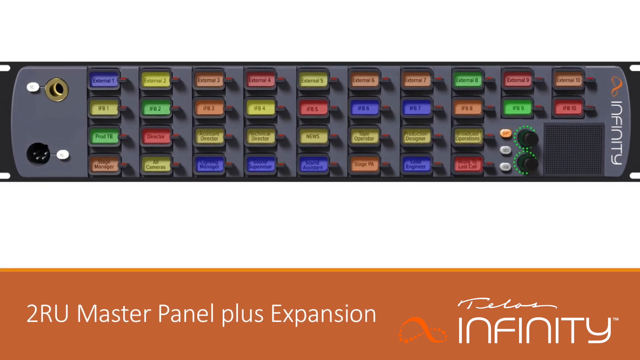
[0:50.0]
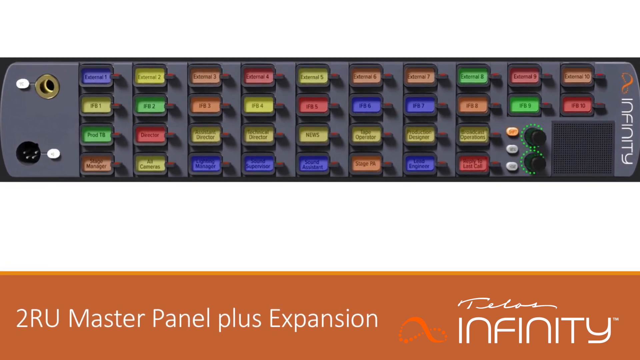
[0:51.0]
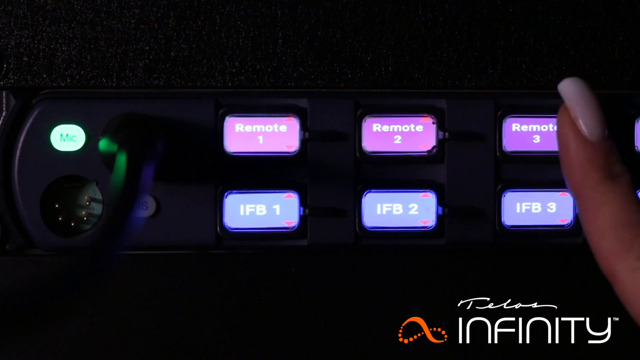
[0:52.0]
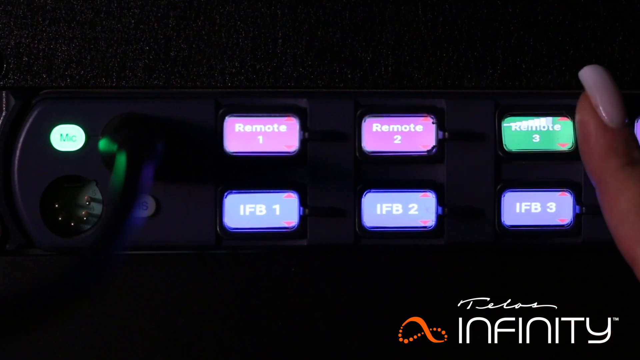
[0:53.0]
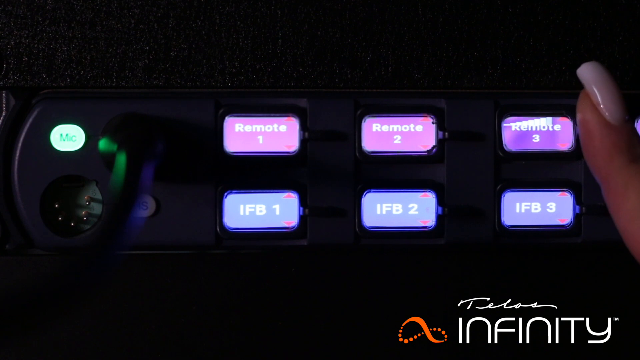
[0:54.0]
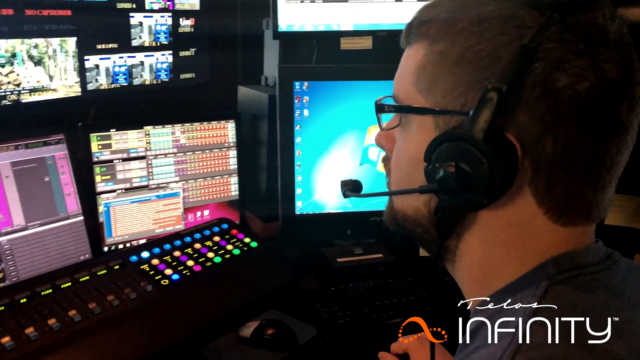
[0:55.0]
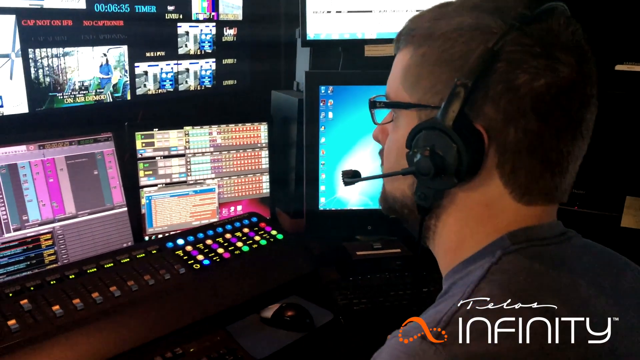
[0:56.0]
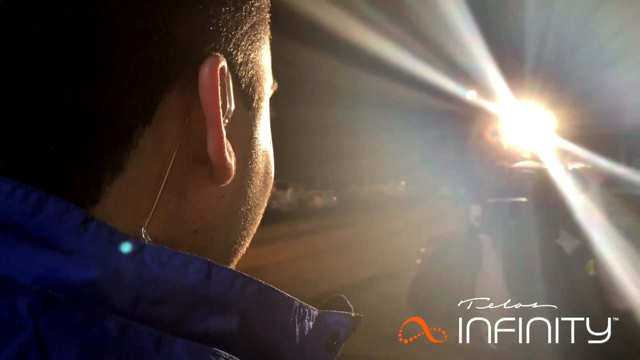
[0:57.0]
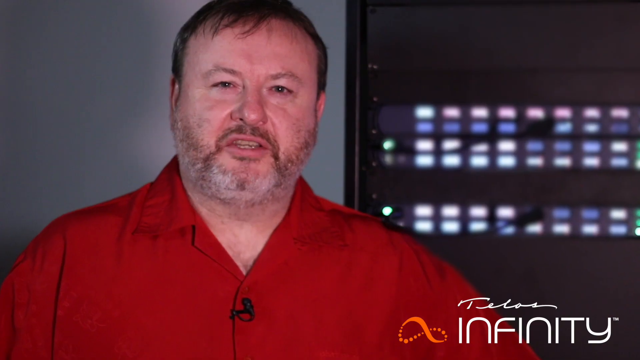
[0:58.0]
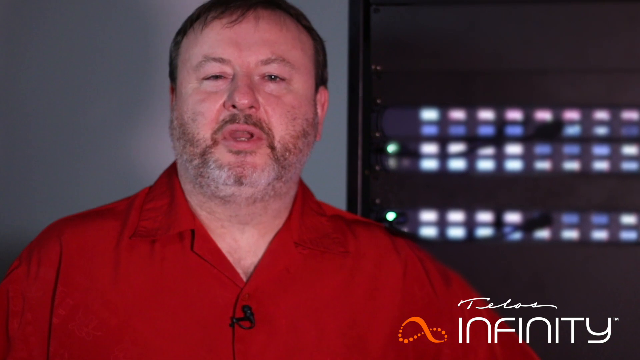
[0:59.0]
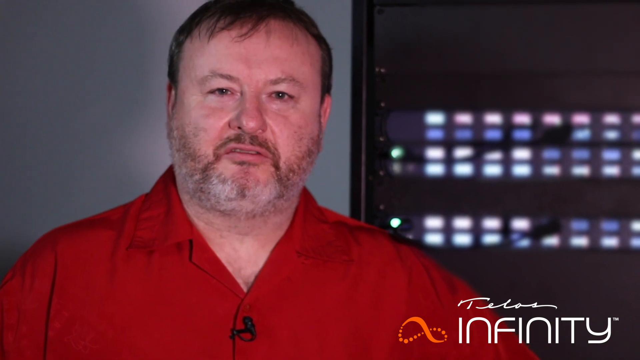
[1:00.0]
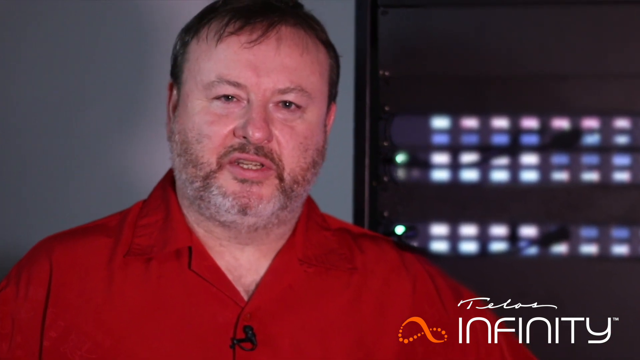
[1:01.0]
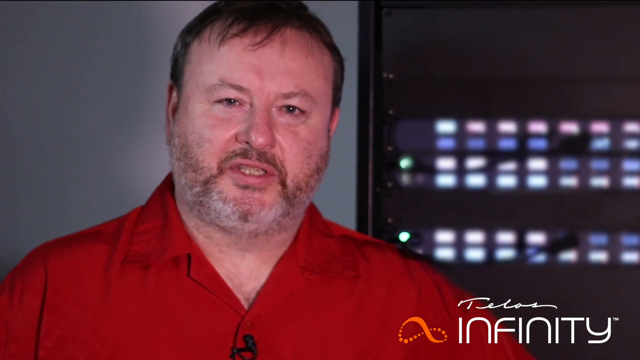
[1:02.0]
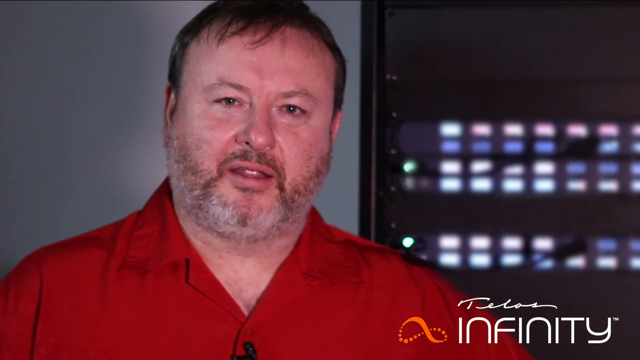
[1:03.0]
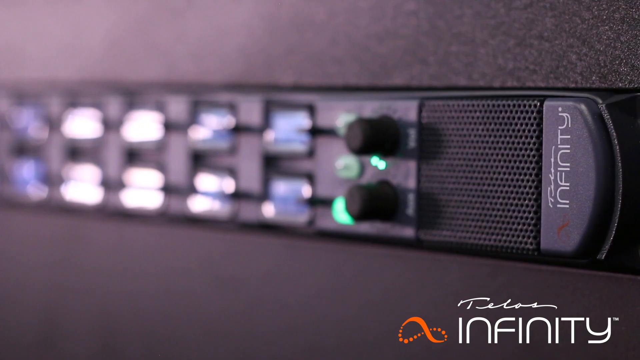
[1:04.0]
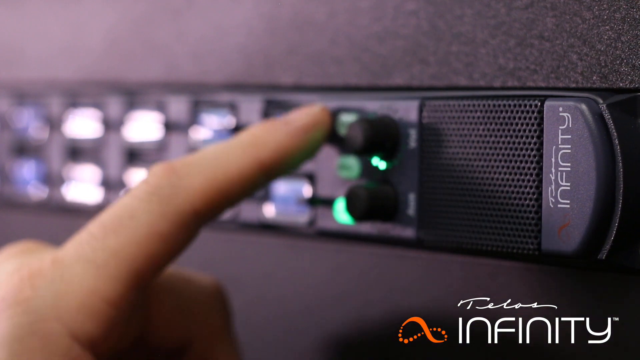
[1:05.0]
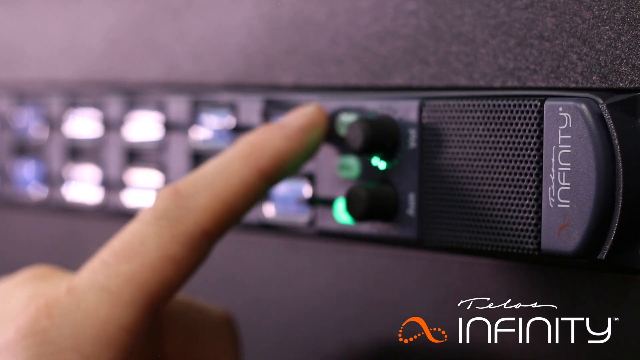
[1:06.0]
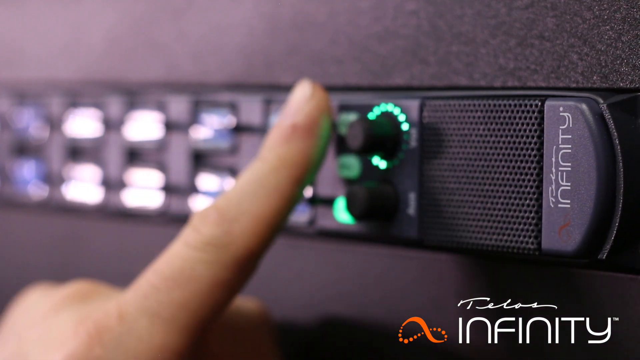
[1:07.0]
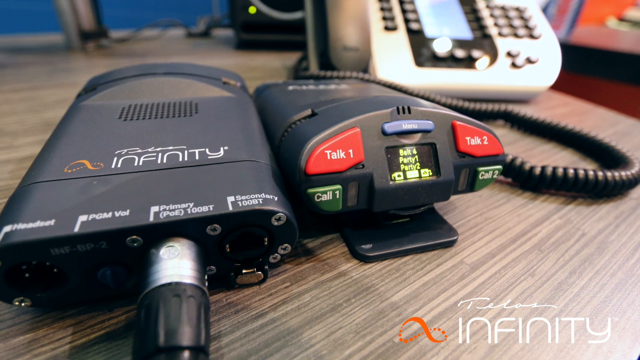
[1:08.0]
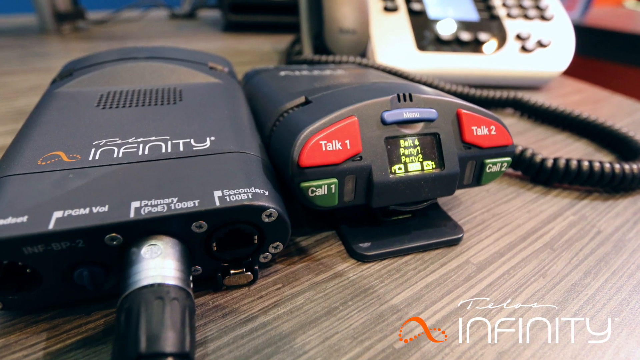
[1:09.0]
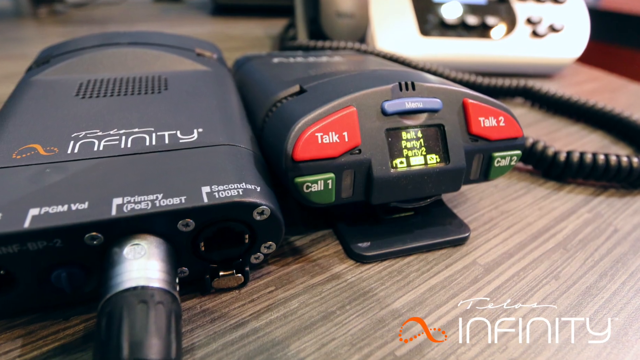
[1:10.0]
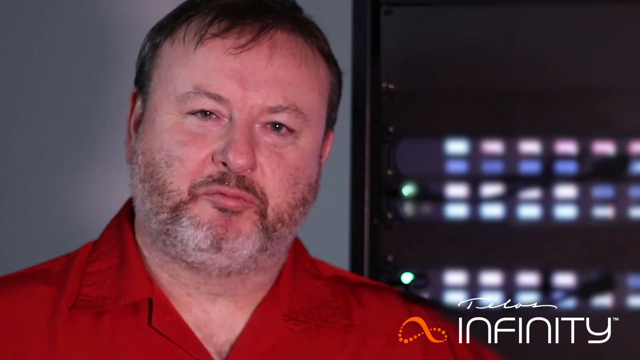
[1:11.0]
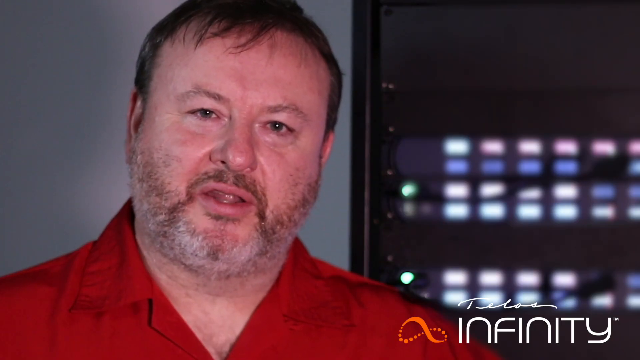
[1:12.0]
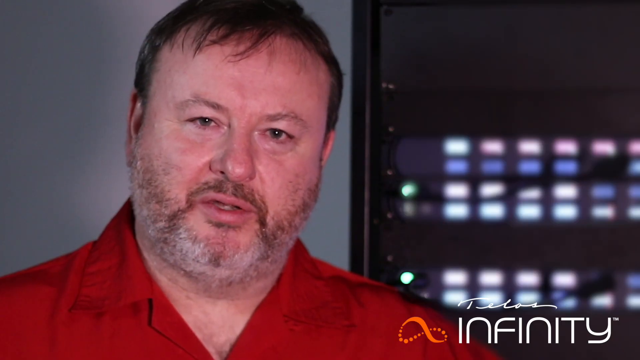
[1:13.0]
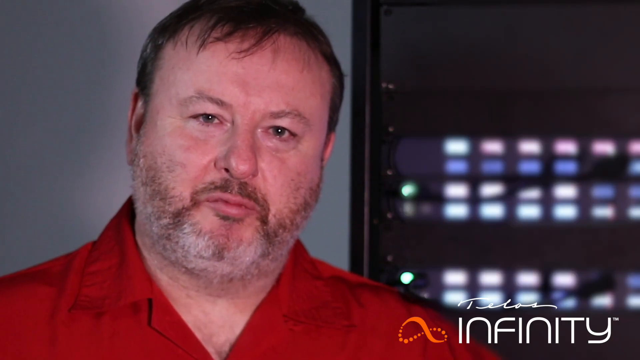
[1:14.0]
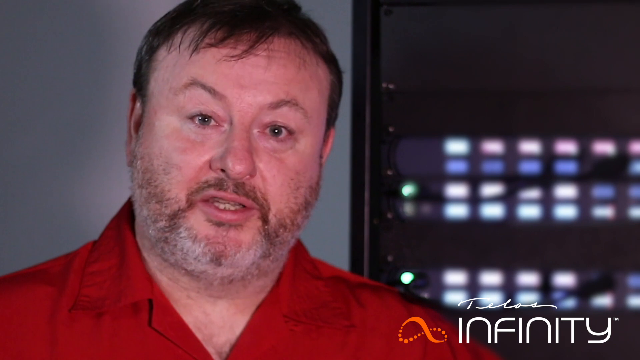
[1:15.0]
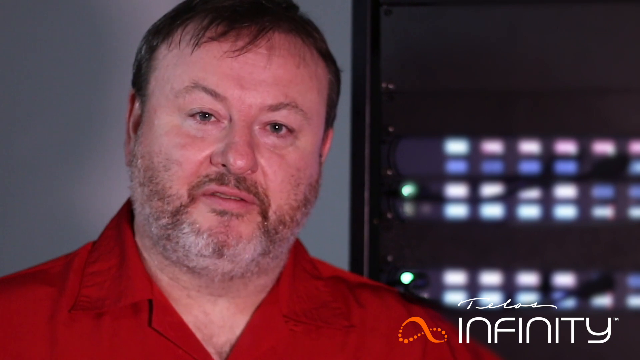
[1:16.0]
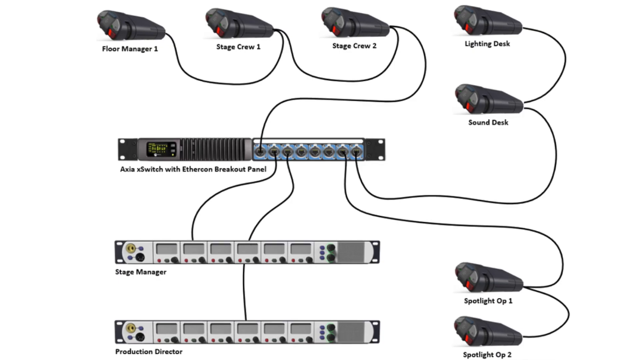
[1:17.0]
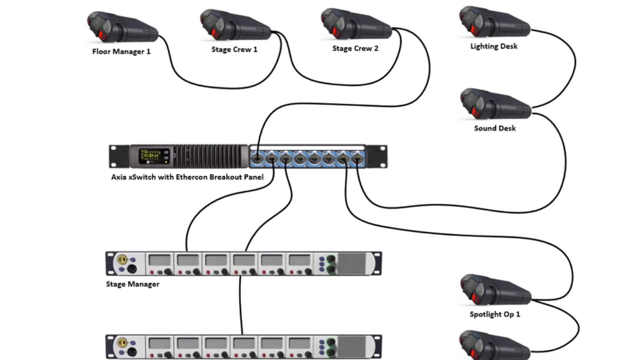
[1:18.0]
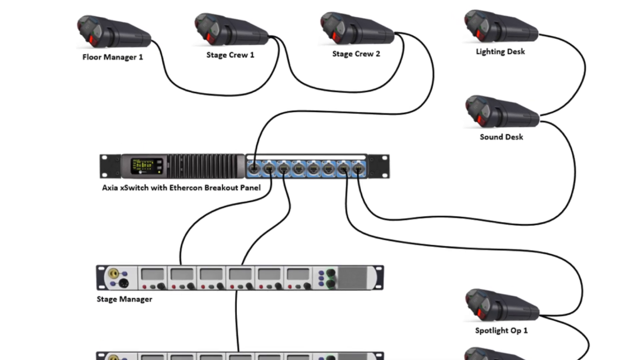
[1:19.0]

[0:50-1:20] A device with four rows of colorful buttons stretches across the top of the screen, with the word "infinity" on the far right of the panel. The camera shows a close-up of the device, and then the scene changes to a background with two rows of buttons: the top row in pinks and purples, the bottom row possibly blue. The top buttons read "Remote 1", "Remote 2" and "Remote 3", and the buttons below say "IFB1", "IFB2" and "IFB3". On the left side of the screen is a green circle with very small, illegible text inside, along with a couple of other green objects. Next, the left side of a man's face appears on the right side of the screen. He has a beard and mustache, short cropped brown hair and glasses, and wears headsets with a microphone on the left side of his face. In front of him are a keyboard and three monitors, with other monitors behind them in the top left corner of the frame. Next, a person's head is on the left side of the screen, showing only brown hair, an ear, neck and shoulders; the person stares into a light on the right side of the screen that casts beams at the top and bottom. The man in the red button-down shirt speaks on the left side of the screen with a panel of buttons on the right. Then an Infinity device with two rows of buttons is shown in the center of the screen. A Caucasian hand's index finger points to one of the buttons and presses it, and then three devices are shown on a table. On the left is one by Infinity; in the center is a device with red buttons on each side that say "Talk 1" and "Talk 2", green buttons at the bottom of each side that say "Call 1" and "Call 2", and a small monitor in the center with a lavender button above it. Behind that device is a white device with buttons and keys. The man in the red button-down shirt speaks to the camera again. Next, a diagram appears with indicators at the top for "Floor Manager 1", "Stage Crew 1", "Stage Crew 2" and "Lighting Deck", with "Sound Deck" underneath "Lighting Deck". Below is a long strip with illegible text, and at the bottom is a bar that says "Stage Manager", with another illegible area to its right.